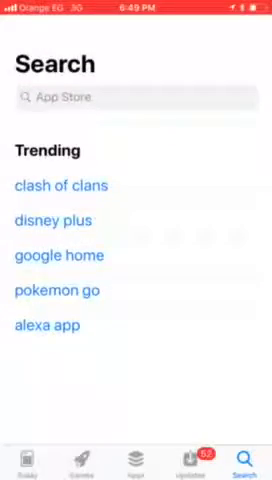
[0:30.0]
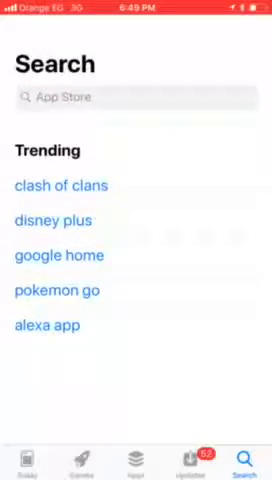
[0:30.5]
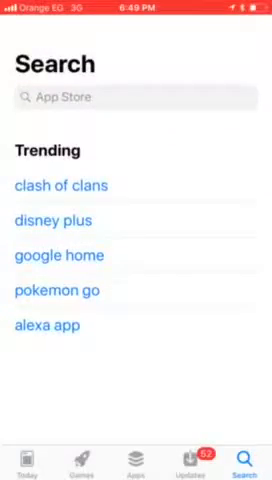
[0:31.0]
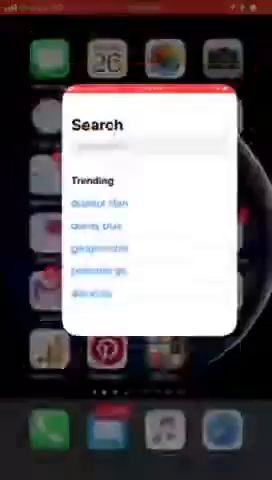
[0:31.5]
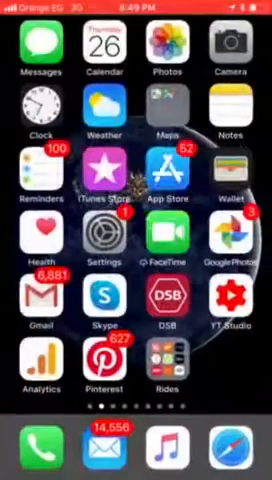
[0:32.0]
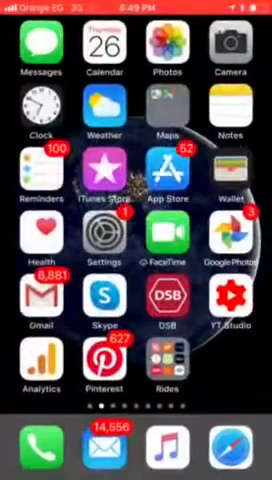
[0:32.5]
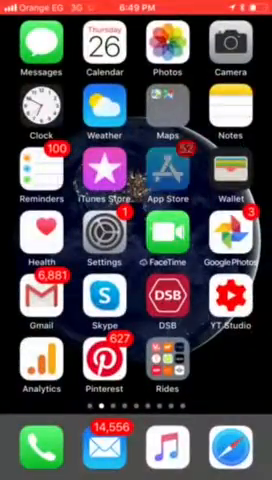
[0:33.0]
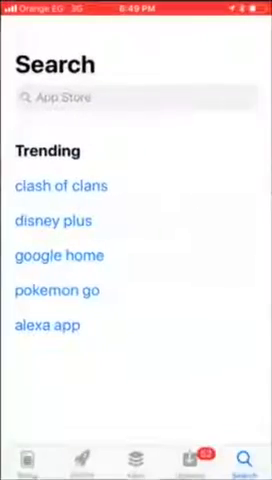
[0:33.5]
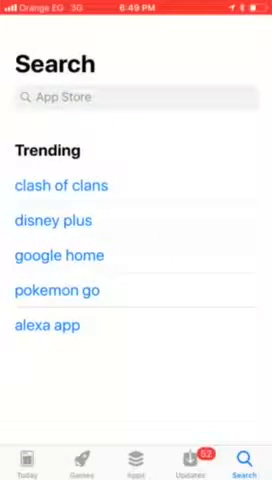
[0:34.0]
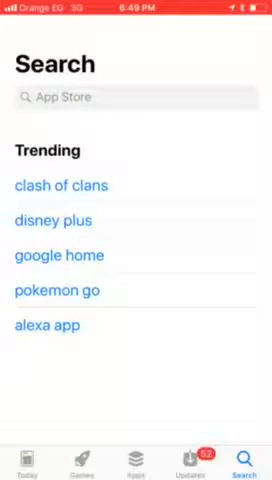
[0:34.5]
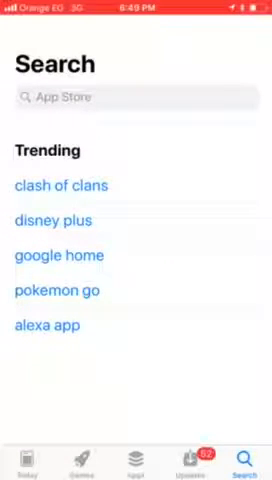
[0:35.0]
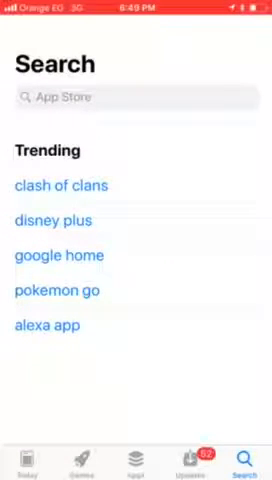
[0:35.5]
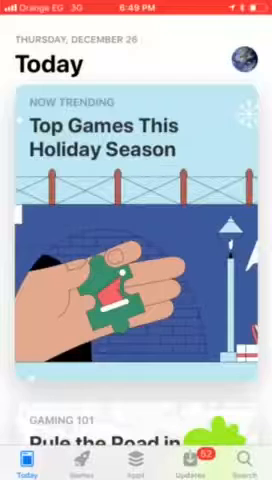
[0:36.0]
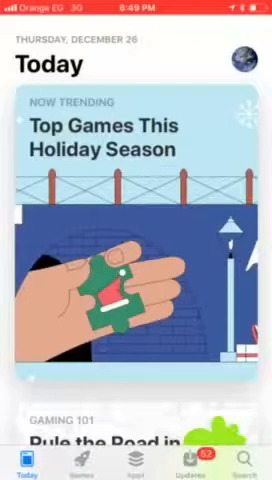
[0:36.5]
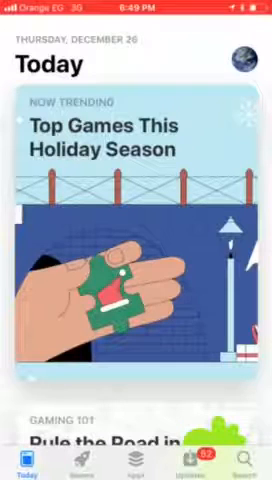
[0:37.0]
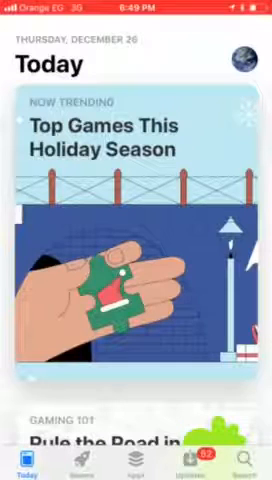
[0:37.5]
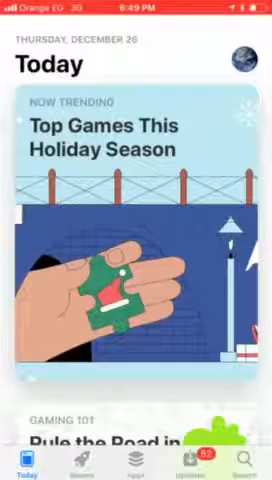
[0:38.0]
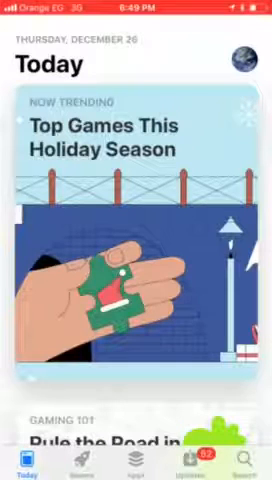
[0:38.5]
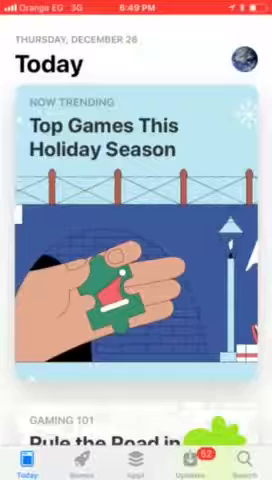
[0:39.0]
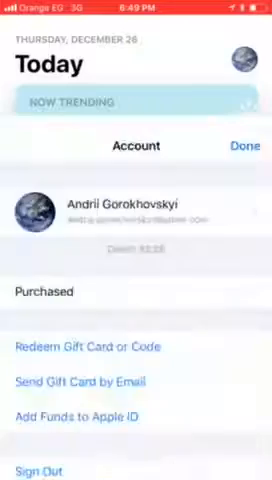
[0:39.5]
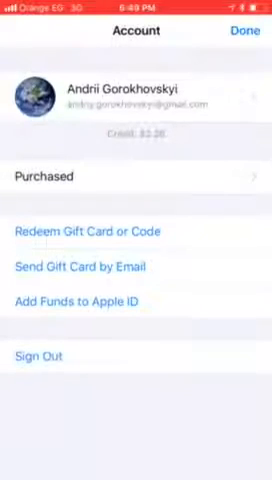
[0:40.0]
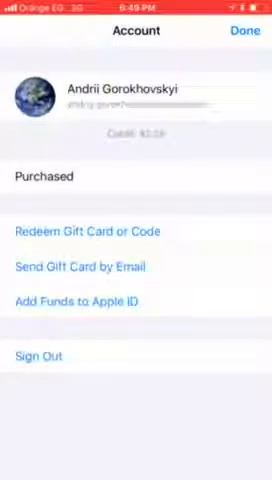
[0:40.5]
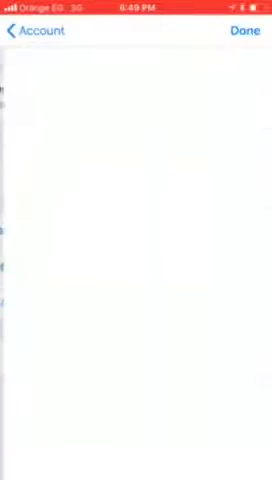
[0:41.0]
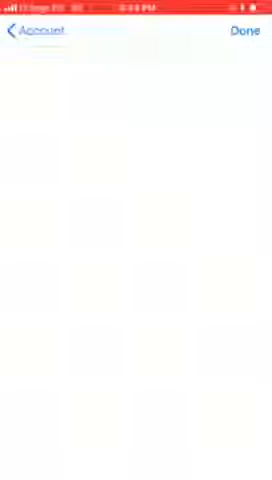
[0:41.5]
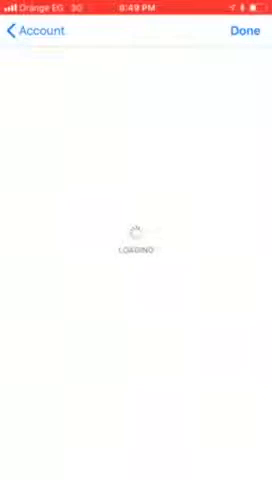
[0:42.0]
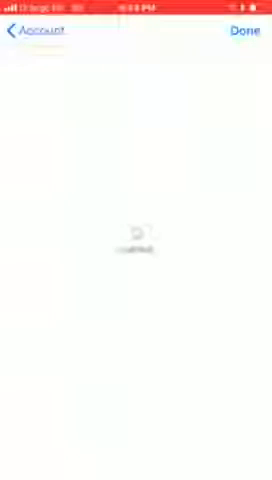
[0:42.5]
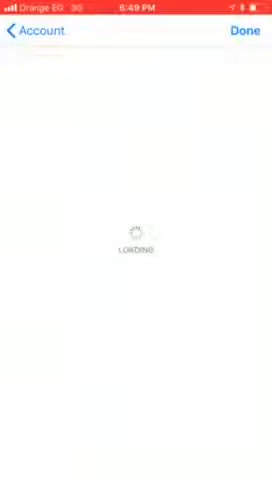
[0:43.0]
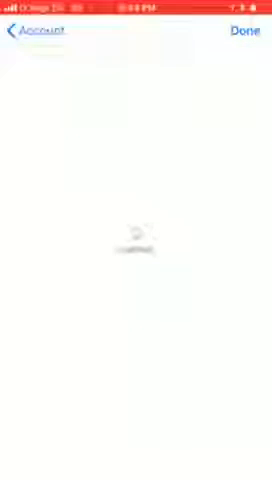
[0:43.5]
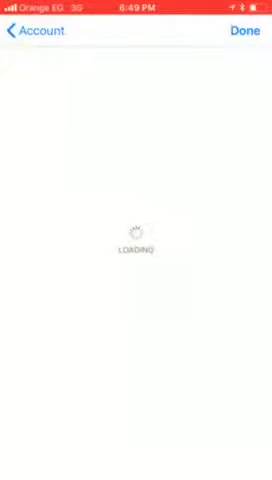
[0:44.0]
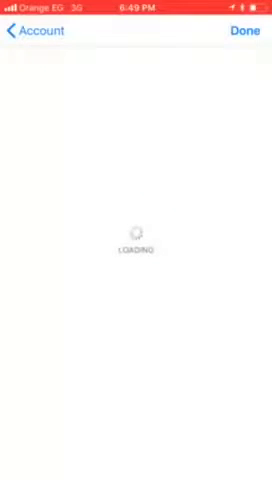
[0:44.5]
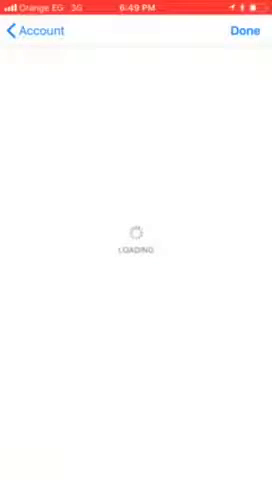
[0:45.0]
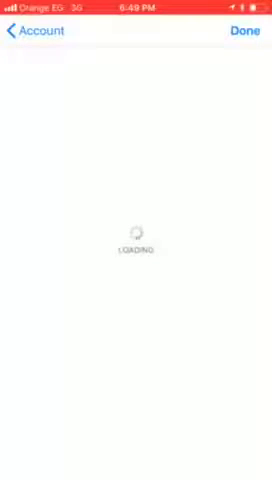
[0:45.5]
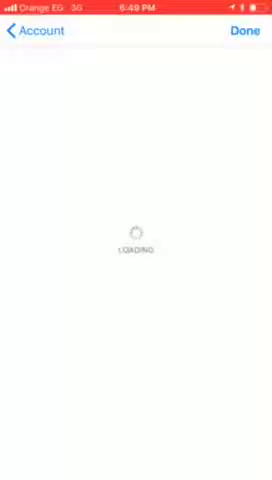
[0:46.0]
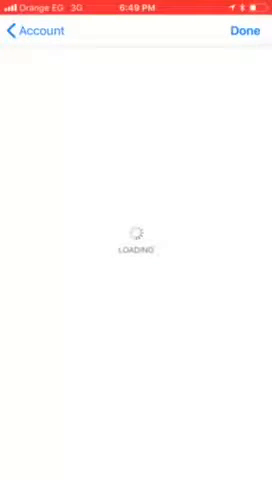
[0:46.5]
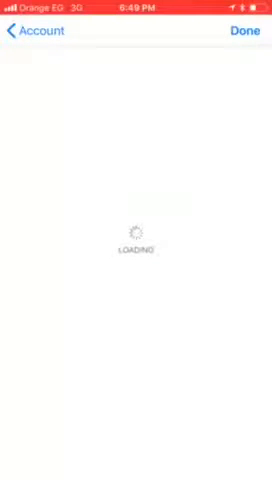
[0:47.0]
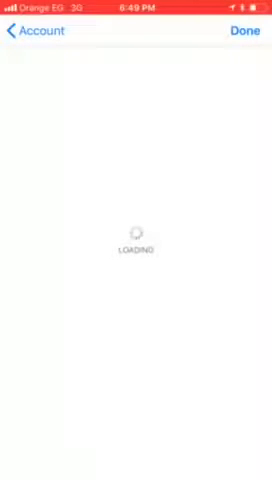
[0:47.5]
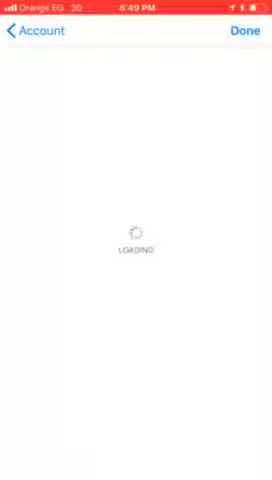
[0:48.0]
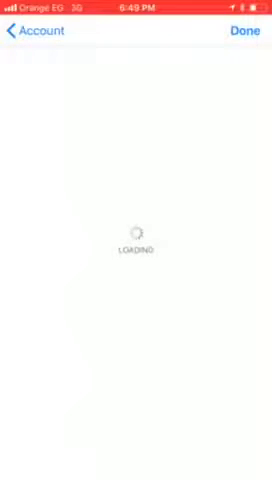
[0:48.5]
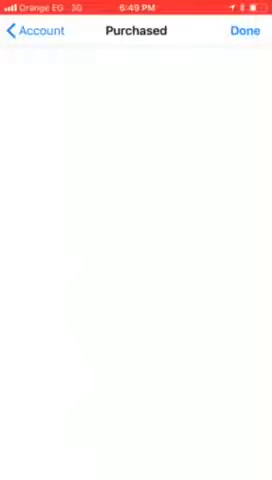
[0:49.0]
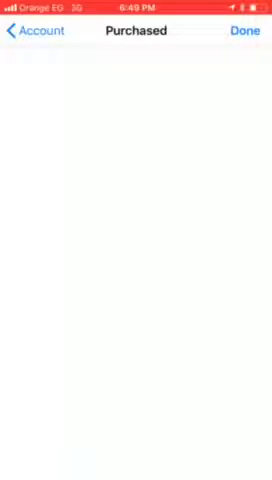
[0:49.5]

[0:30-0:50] The search for iMovie does not seem to find it, so the person goes to their Apple account and then to purchases. The App Store search page shows trending apps, top apps and various categories; the trending section includes Clash of Clans, Disney Plus and Google Home.